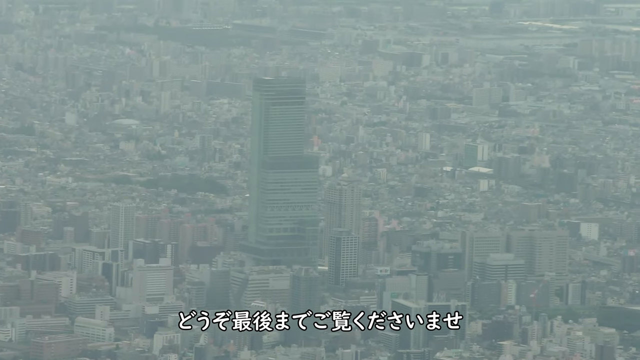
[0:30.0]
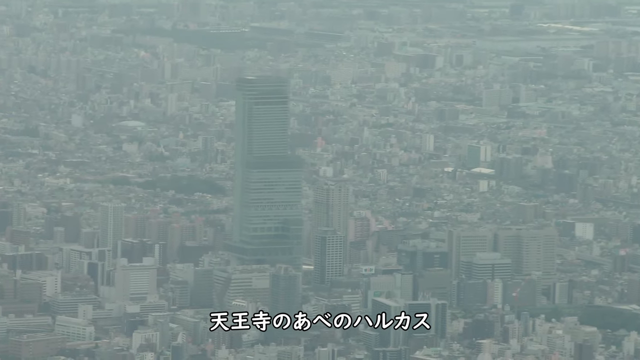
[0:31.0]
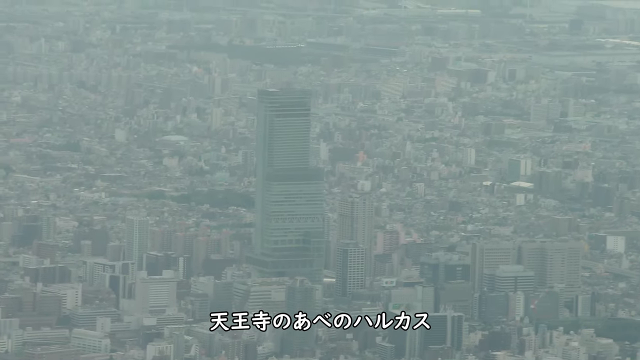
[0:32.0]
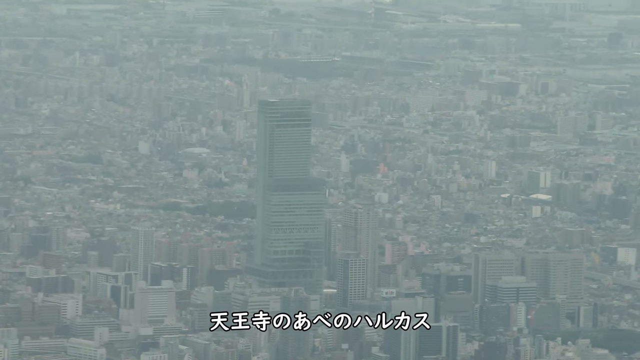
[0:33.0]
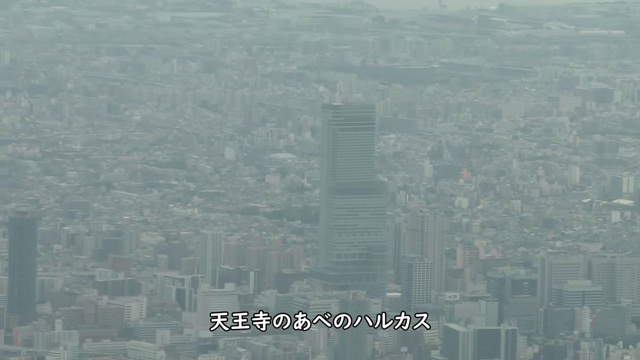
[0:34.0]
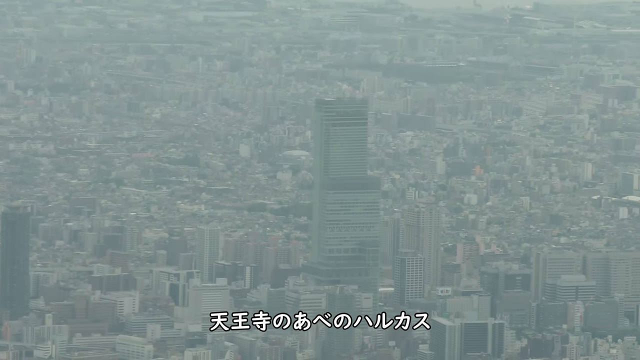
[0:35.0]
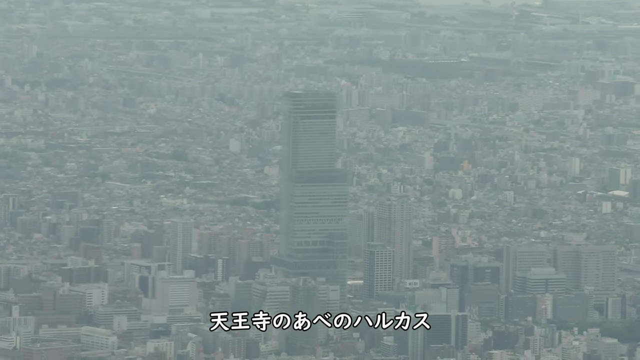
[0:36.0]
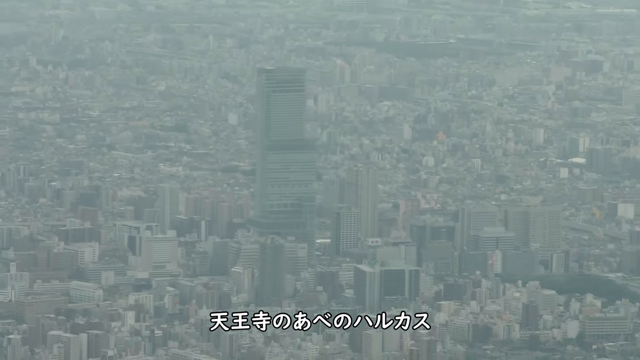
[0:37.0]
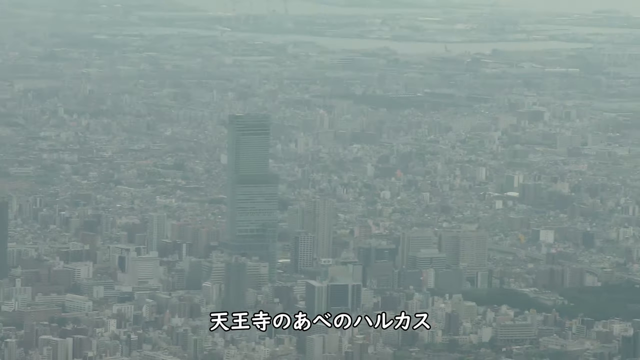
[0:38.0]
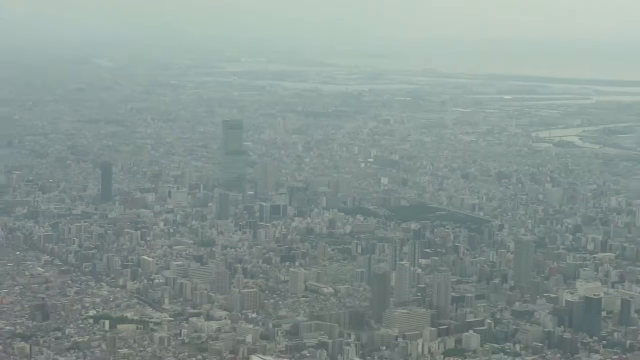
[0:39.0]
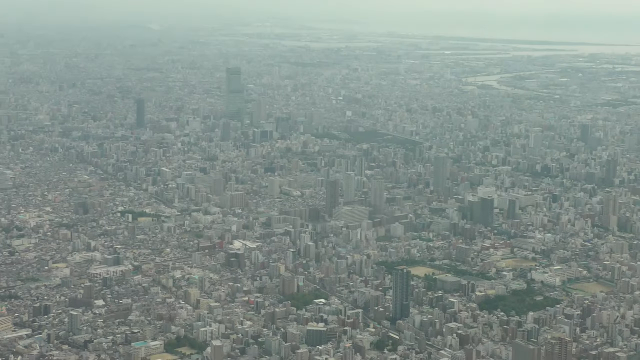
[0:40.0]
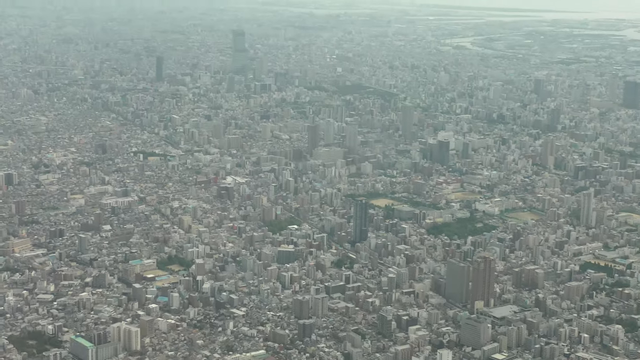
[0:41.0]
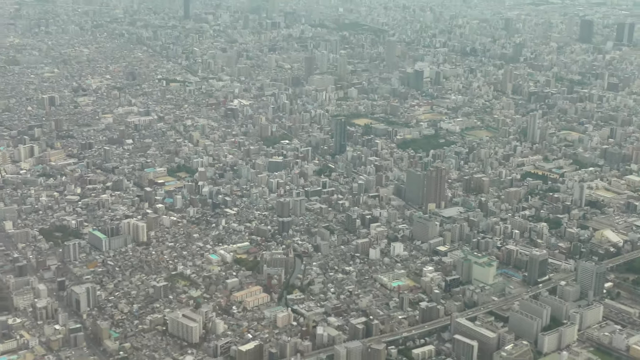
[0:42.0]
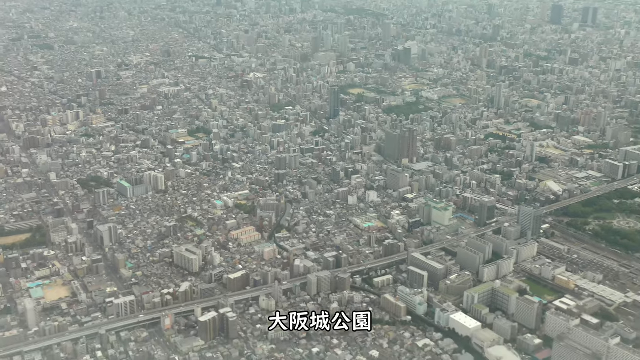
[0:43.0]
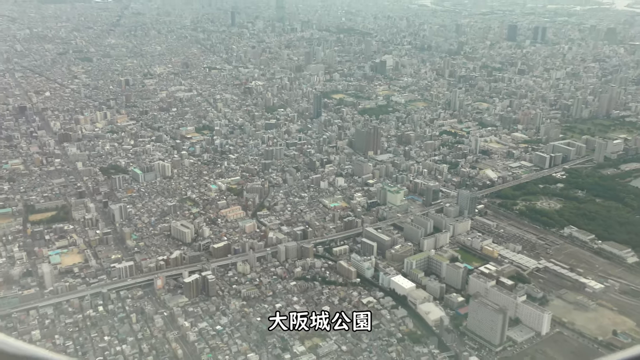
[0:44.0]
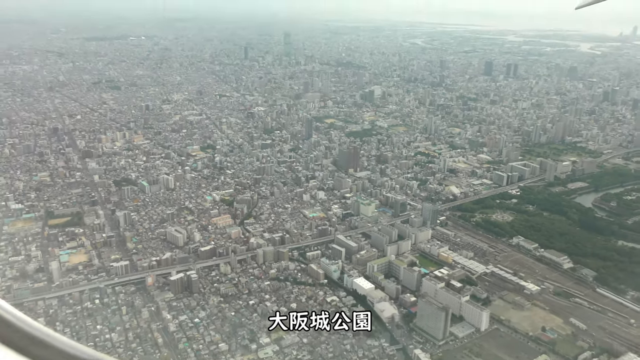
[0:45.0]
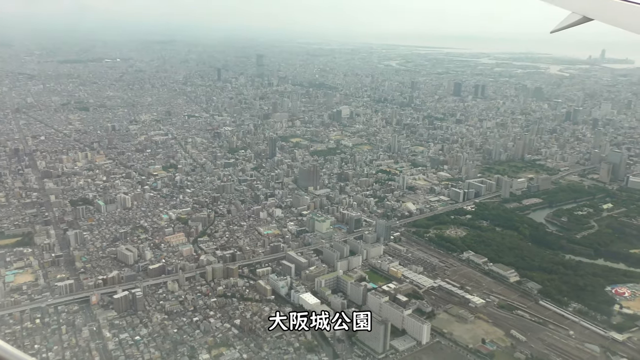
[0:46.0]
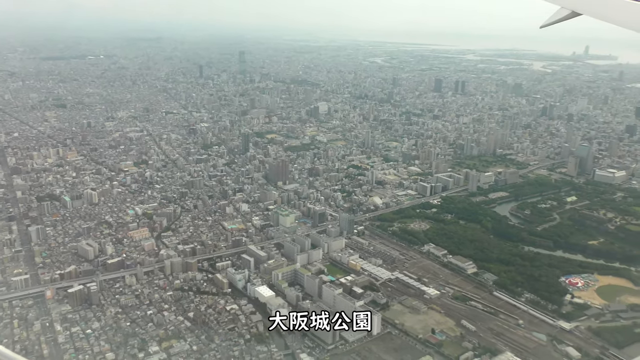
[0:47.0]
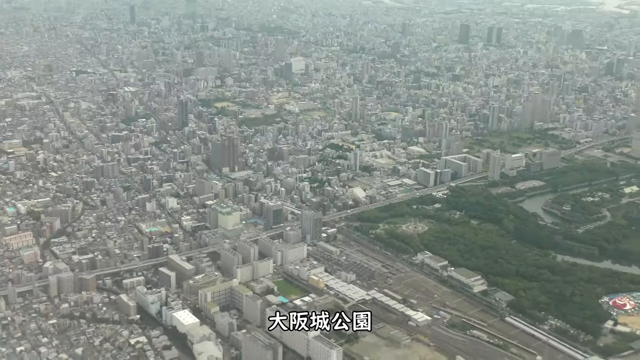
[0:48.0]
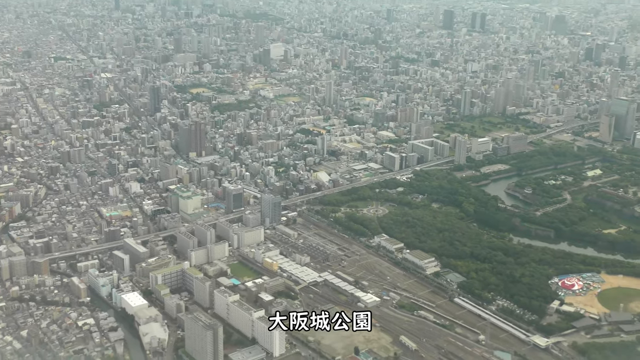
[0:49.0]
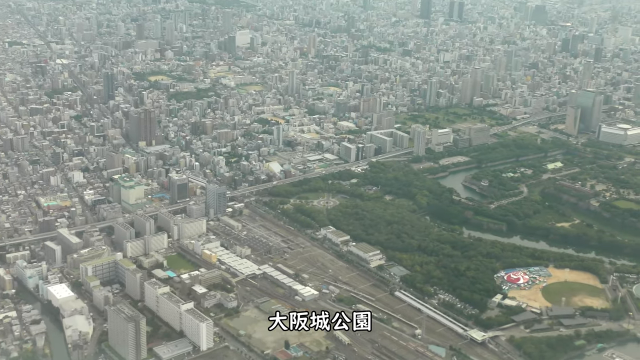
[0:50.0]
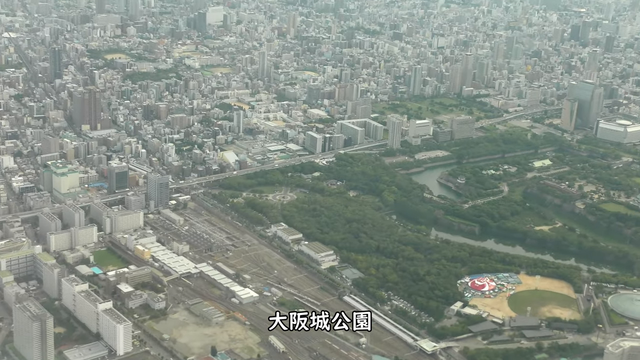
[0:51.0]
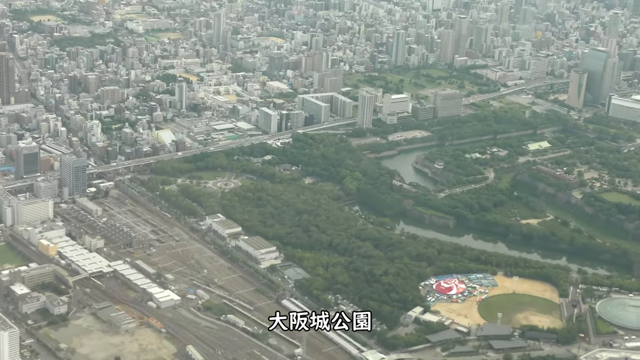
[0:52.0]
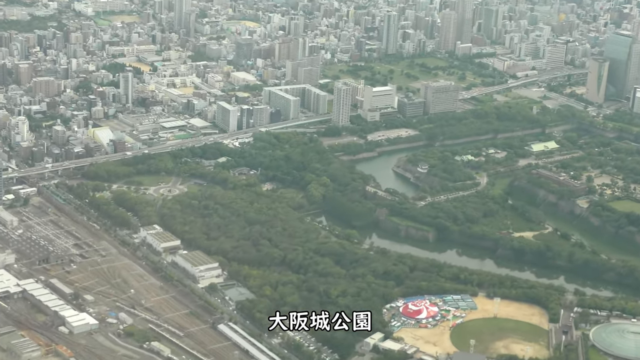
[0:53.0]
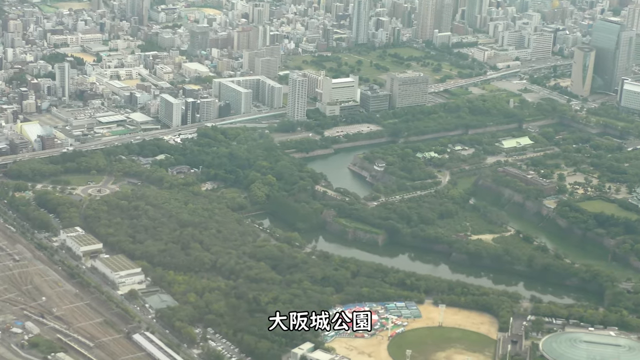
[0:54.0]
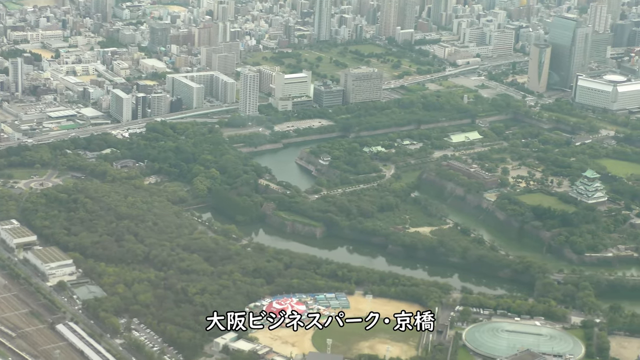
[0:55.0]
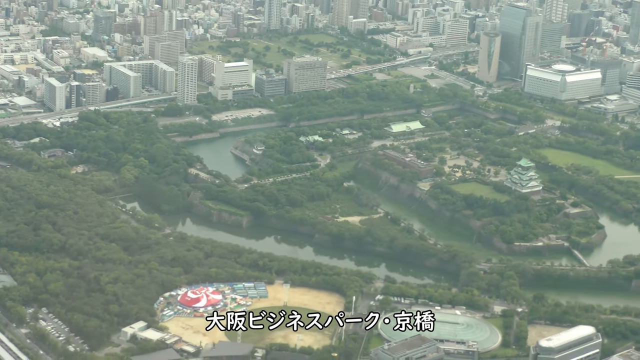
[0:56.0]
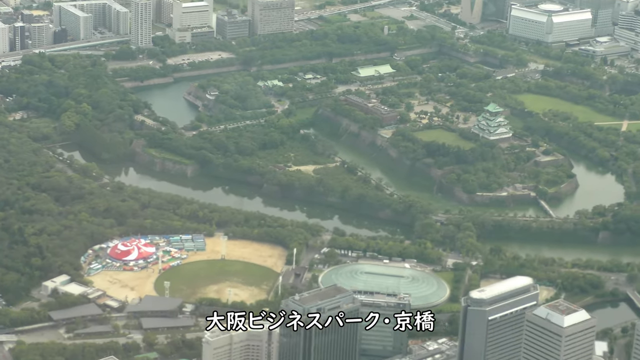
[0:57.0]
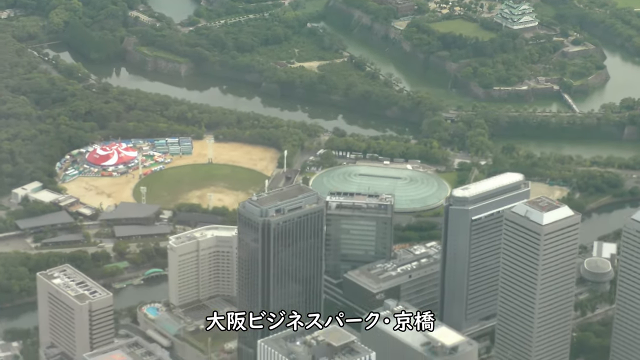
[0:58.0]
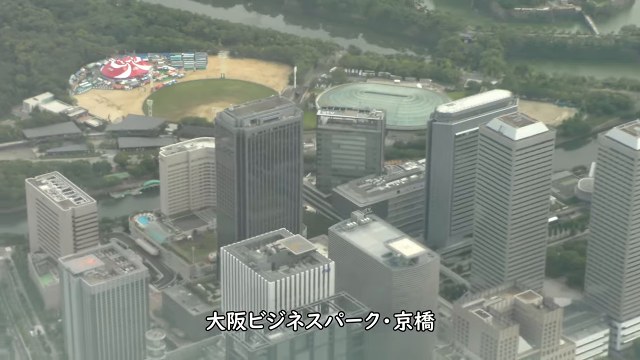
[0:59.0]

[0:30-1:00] The jetliner flies around the city of Tokyo. The shot focuses on the main downtown area and the tallest building in view, which has a light green, shiny texture and windows that appear very long and narrow. The video slowly pans out, then pans out faster, showing multiple tall buildings around the taller one. It then shows a green space on the lower right that appears to be some kind of park, with a track and field and what appears to be a baseball stadium next to it. A narrow pond winds around the park and has an island in it with a couple of buildings on it. Japanese text appears at the bottom of the video.